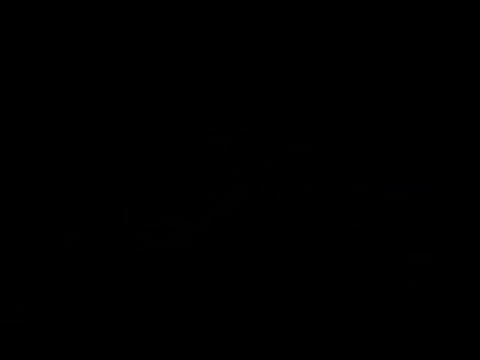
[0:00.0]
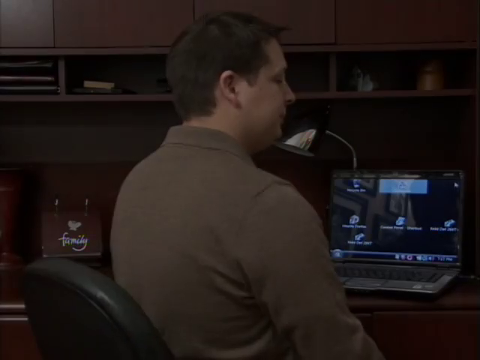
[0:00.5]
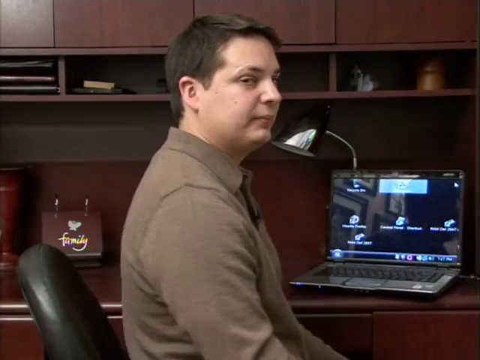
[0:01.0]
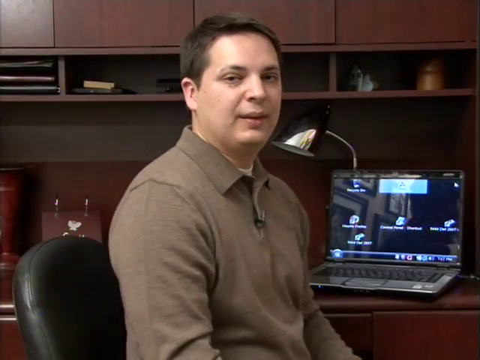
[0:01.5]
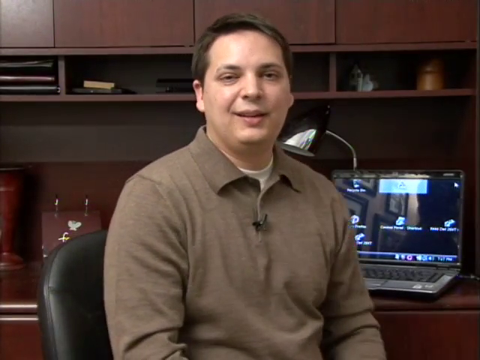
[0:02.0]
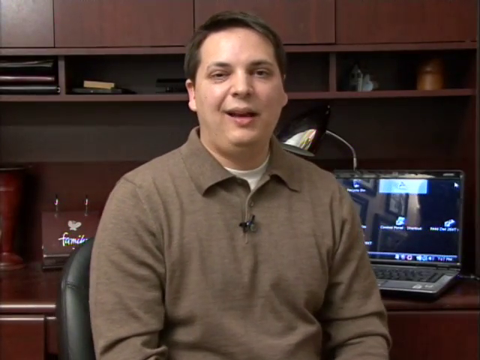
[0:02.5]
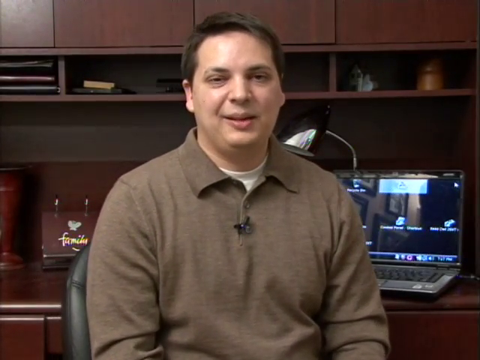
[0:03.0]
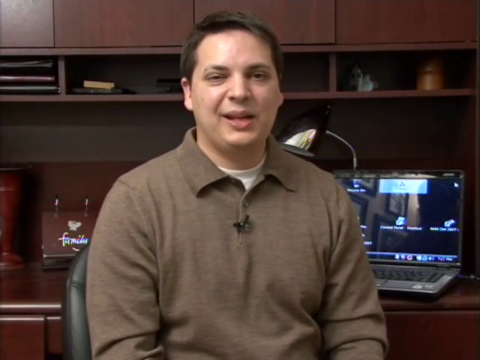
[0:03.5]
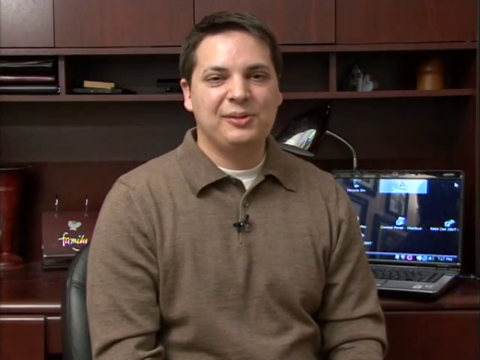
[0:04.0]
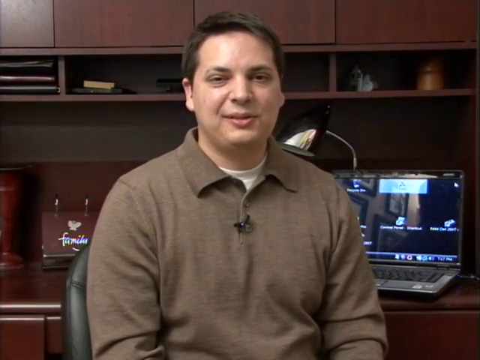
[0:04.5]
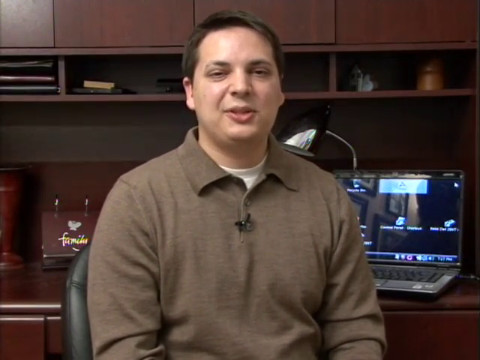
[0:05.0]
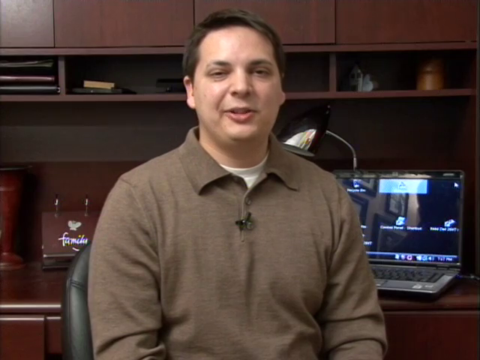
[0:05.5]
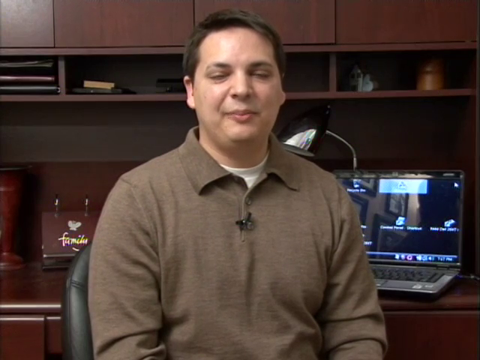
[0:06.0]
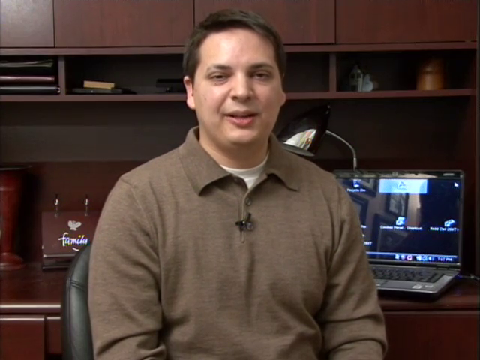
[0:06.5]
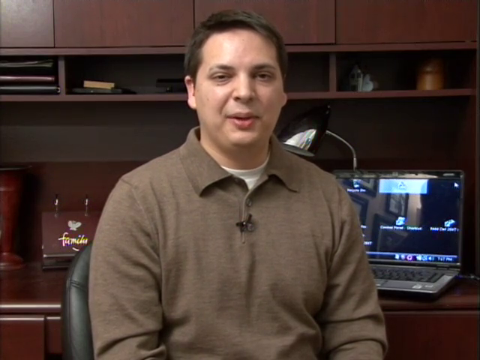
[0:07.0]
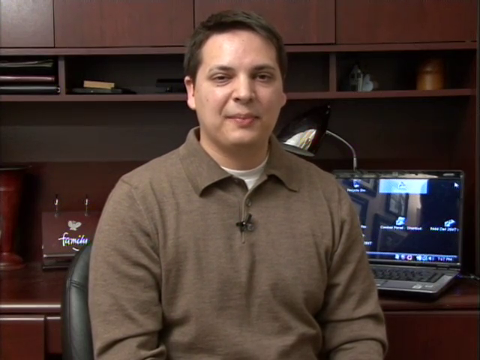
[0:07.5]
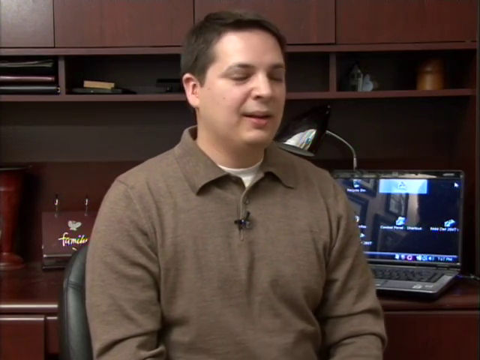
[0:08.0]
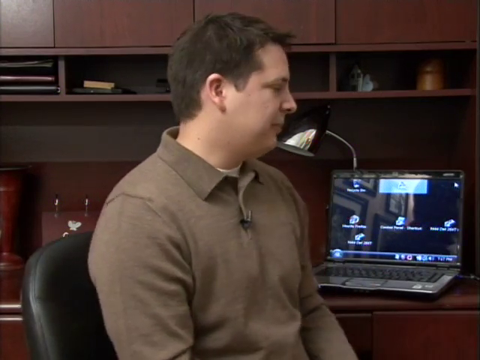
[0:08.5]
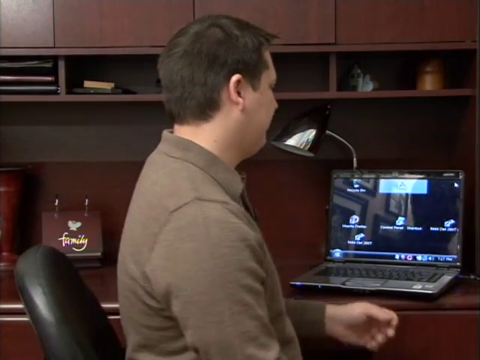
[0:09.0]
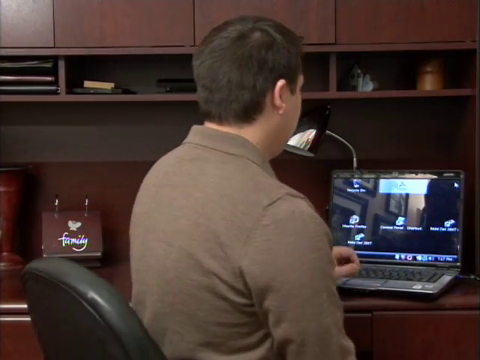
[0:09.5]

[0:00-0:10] A man sits at a laptop, seen from the back, in a brown leather chair at a sophisticated-looking desk and office area. He turns around, looks toward the camera, smiles and starts to talk. The scene then changes and he turns back toward his computer.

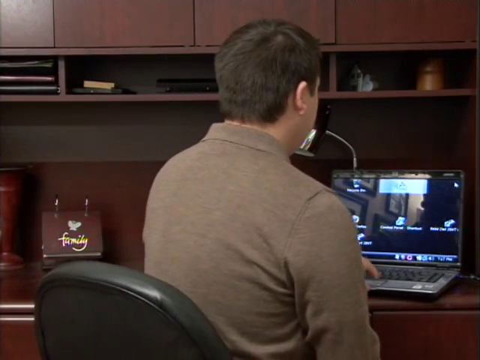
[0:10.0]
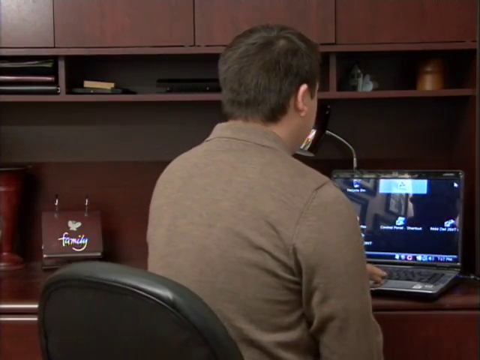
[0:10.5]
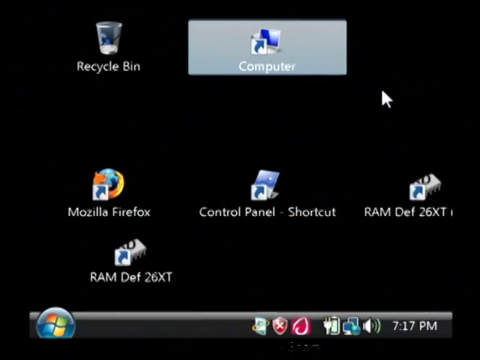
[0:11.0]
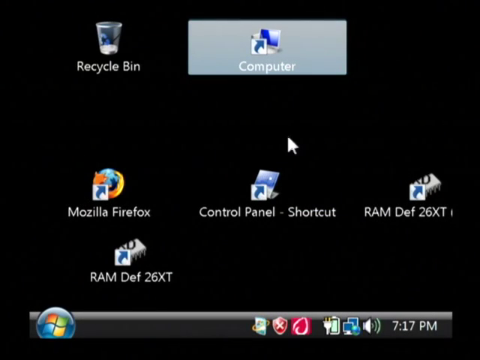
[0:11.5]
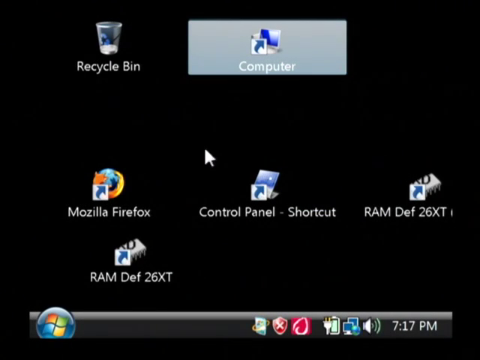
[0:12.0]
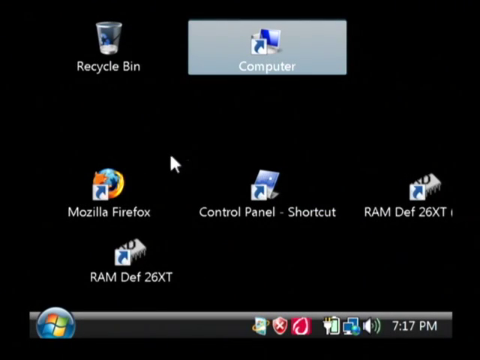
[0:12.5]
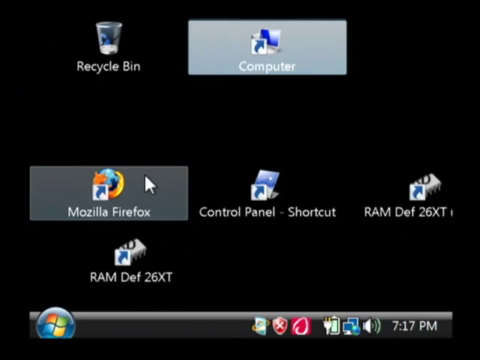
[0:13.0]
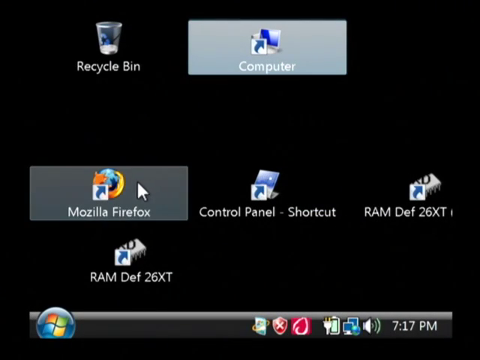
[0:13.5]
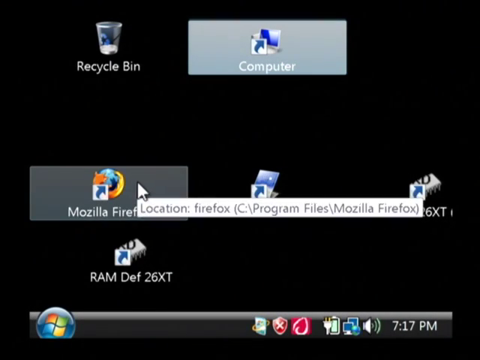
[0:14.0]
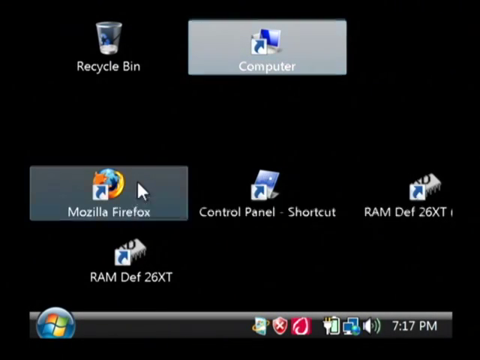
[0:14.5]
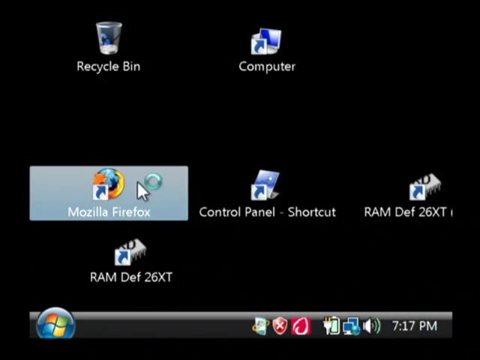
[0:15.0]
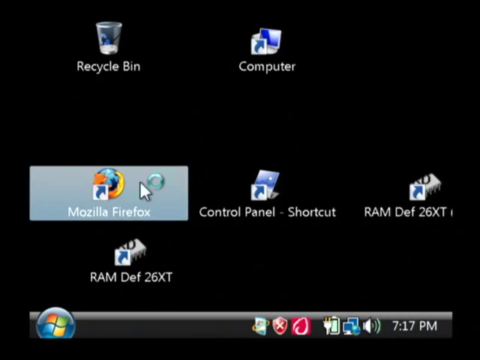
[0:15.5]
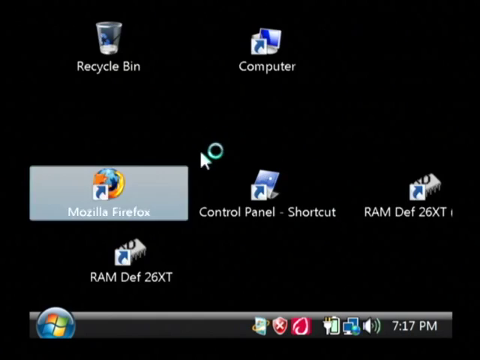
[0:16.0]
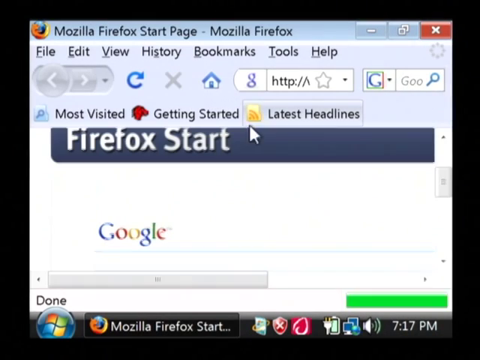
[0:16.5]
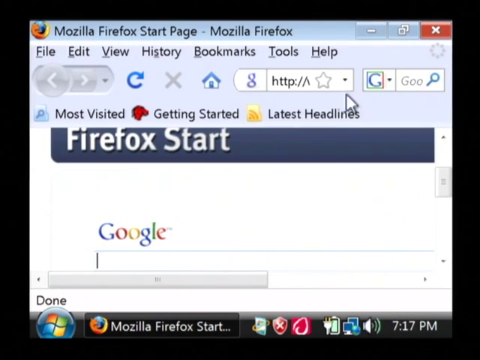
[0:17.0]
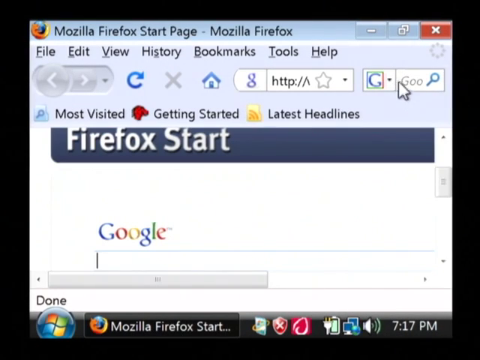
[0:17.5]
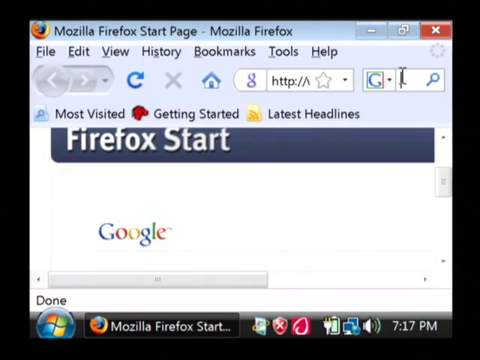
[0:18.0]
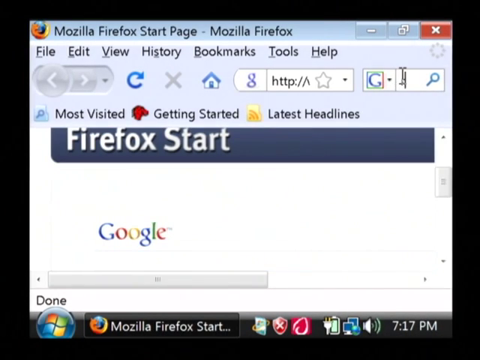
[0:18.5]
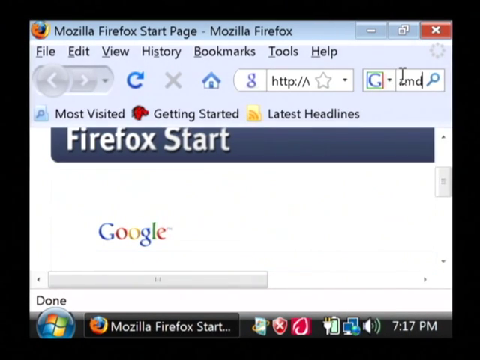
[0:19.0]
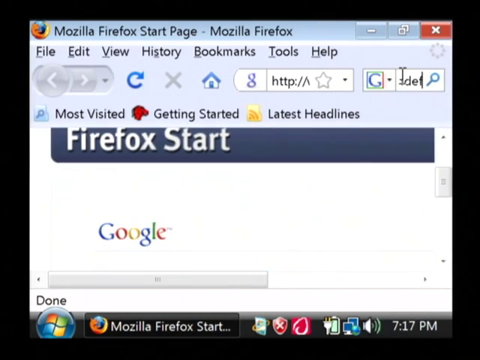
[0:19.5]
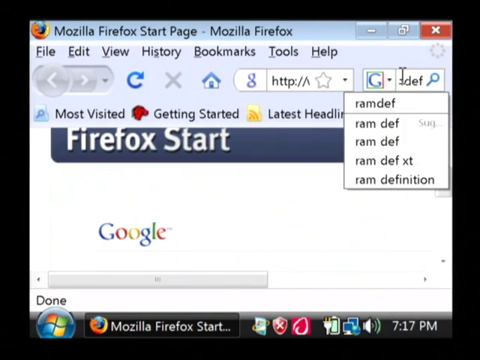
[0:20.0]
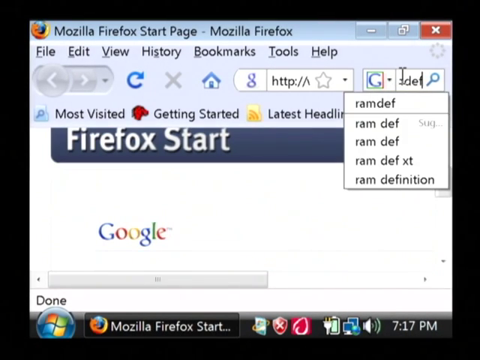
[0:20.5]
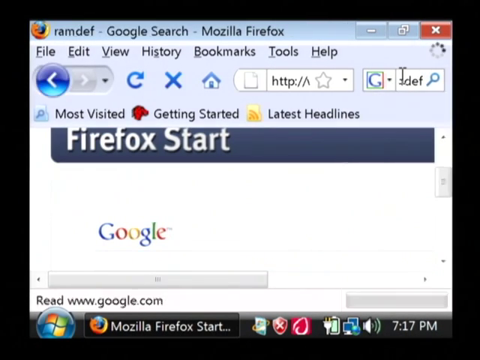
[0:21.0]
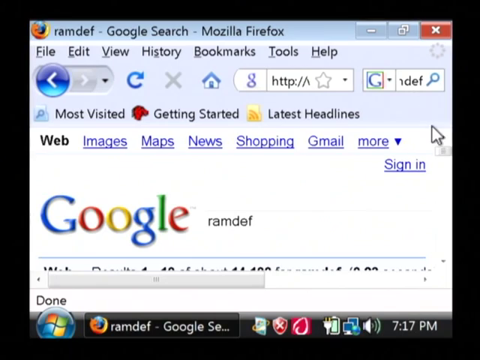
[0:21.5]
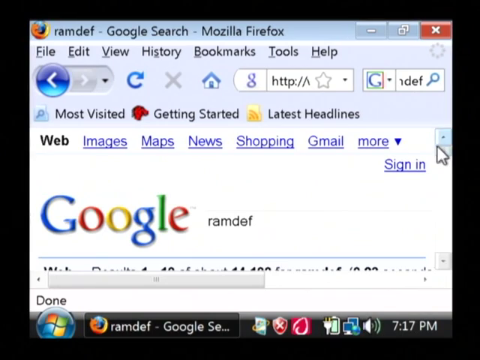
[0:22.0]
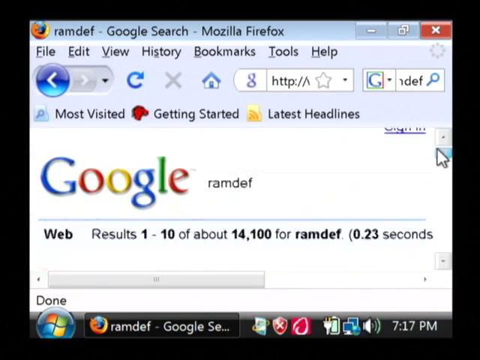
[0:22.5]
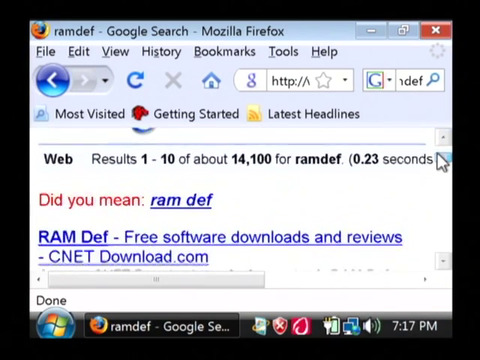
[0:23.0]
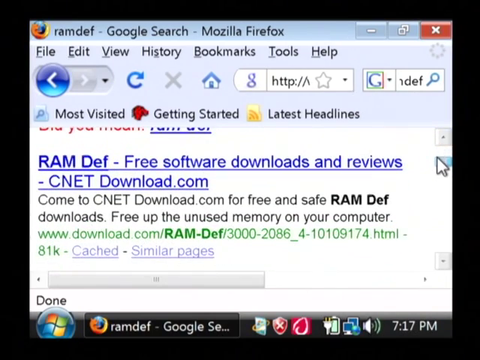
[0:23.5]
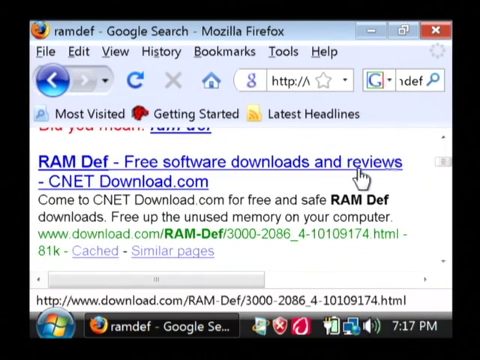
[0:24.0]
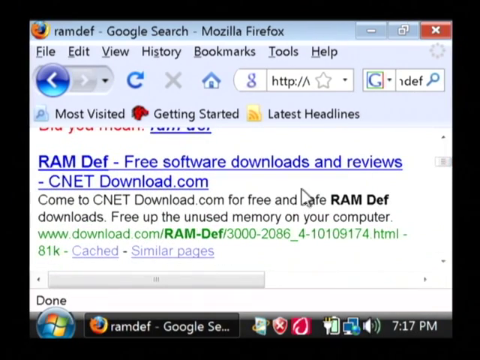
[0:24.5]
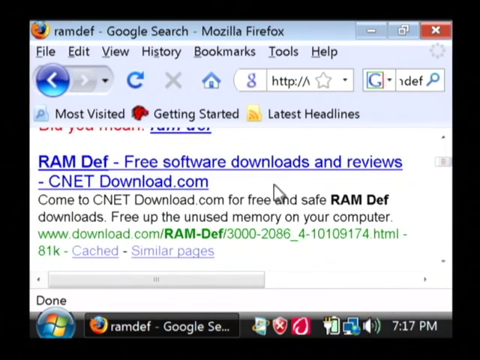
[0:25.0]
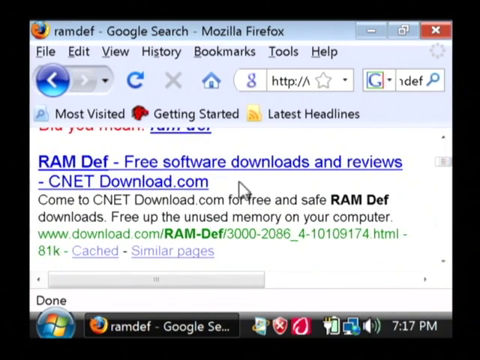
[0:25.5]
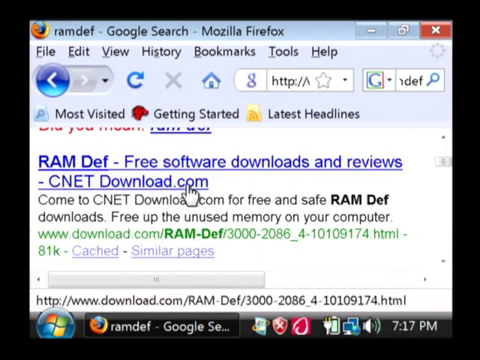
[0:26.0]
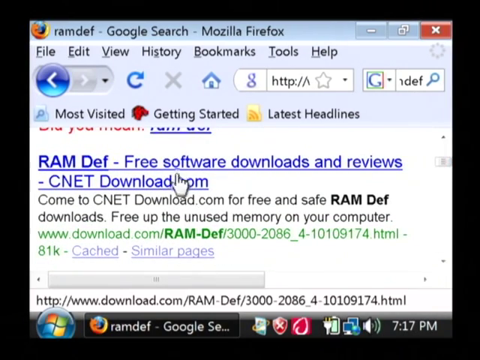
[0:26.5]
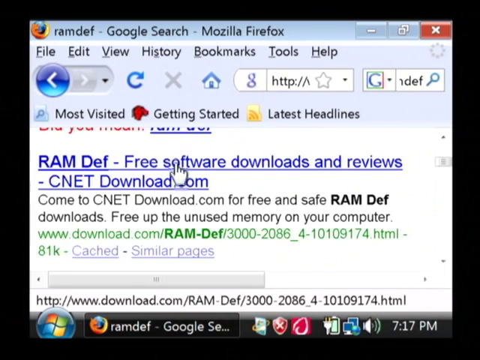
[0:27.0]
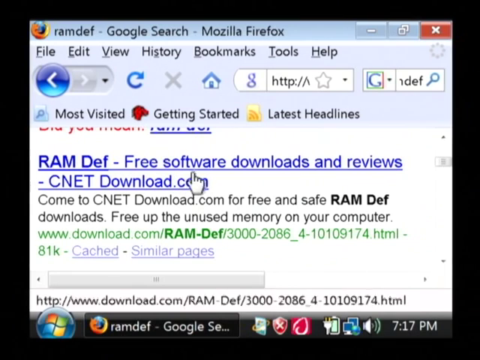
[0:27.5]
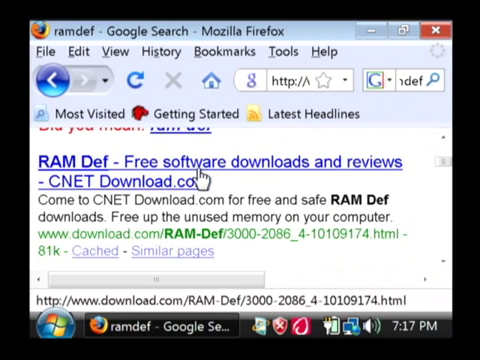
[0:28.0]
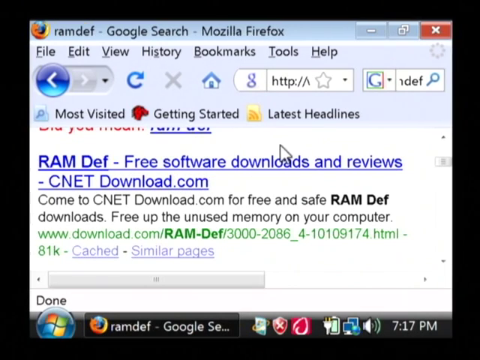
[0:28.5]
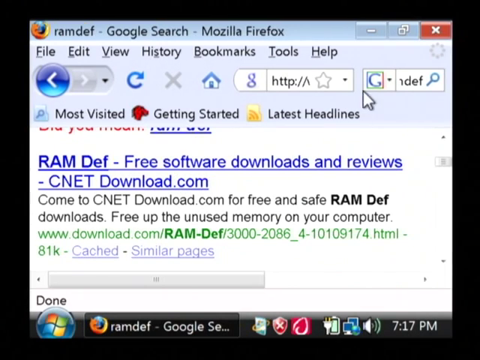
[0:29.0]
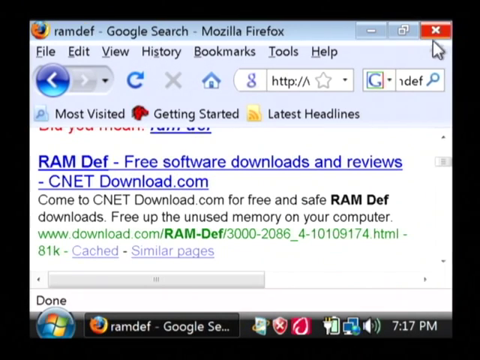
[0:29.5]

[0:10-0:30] The man sits at a large desk with multiple overhead storage places, working on a laptop with a small desk lamp bent around it. To his left is a Rolodex or organizer that says "family," and next to that is some kind of urn or flower pot. He looks at the images on his computer and scrolls, first clicking on Mozilla Firefox, then on Google, where he types in "RAMDEF." The view is very zoomed in, and a result for RAMDEF free software download on CNET comes up.